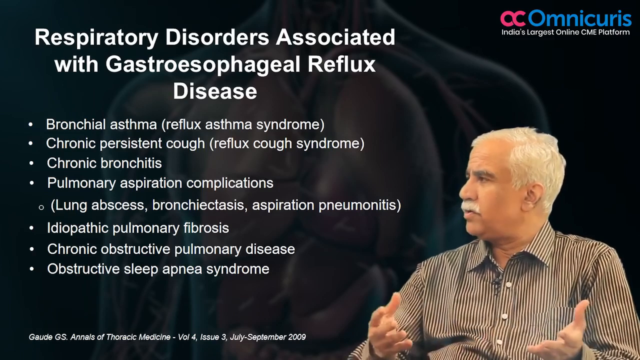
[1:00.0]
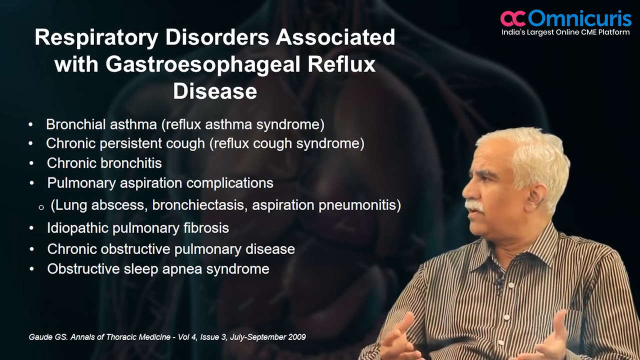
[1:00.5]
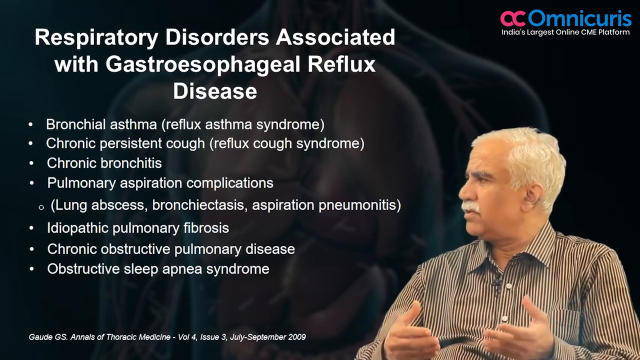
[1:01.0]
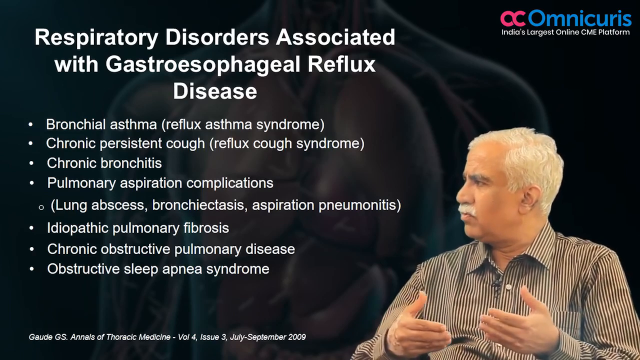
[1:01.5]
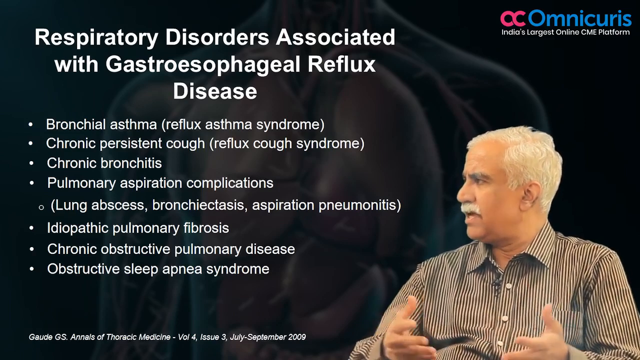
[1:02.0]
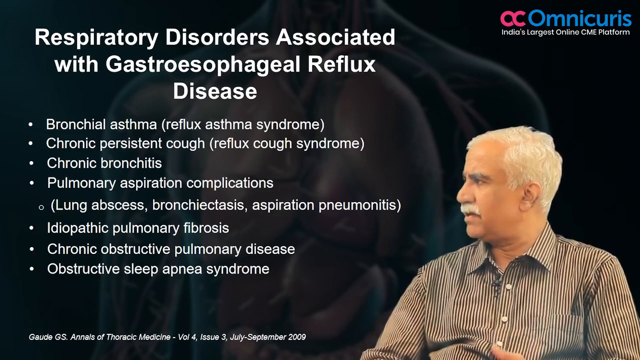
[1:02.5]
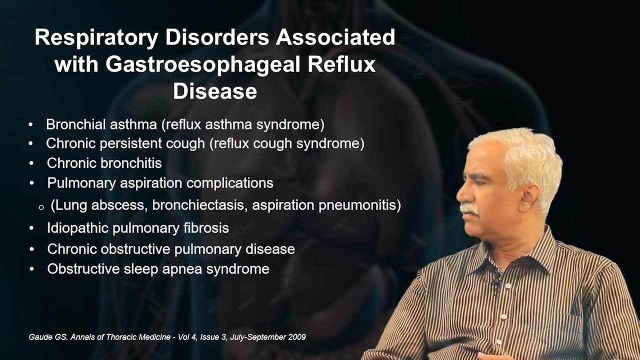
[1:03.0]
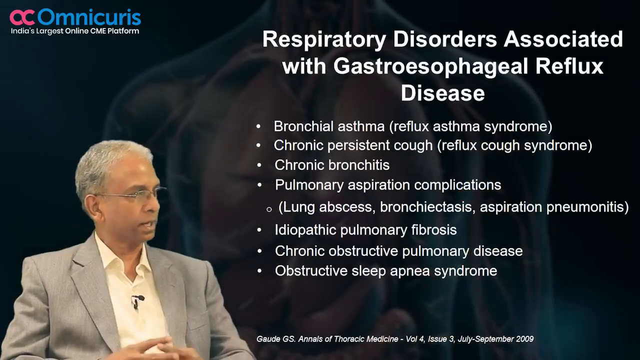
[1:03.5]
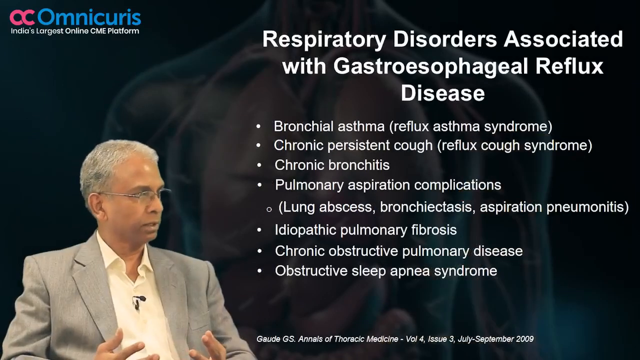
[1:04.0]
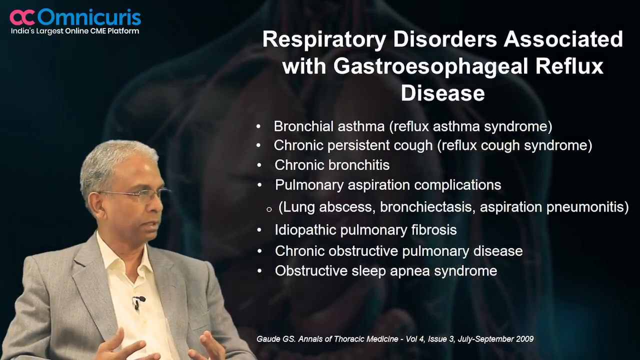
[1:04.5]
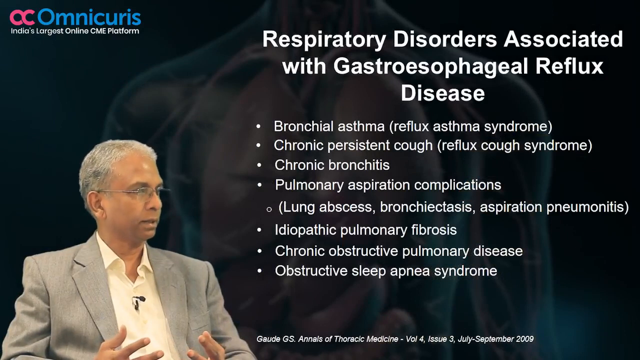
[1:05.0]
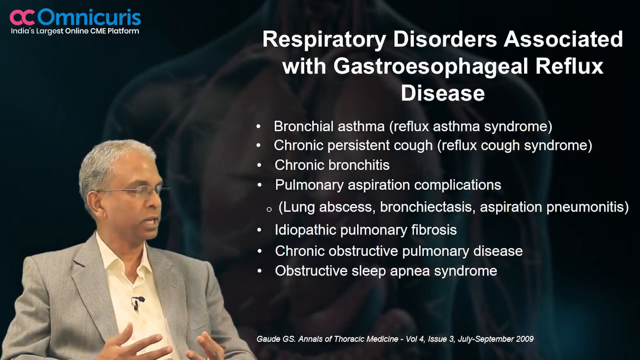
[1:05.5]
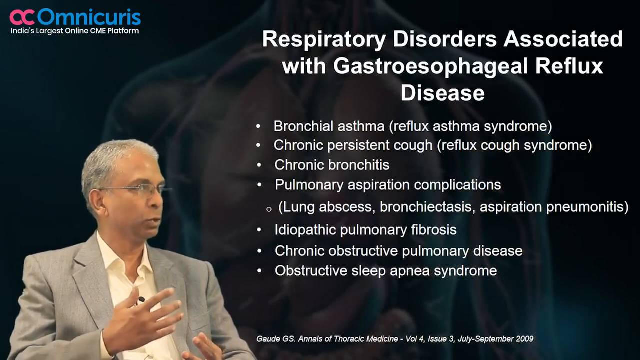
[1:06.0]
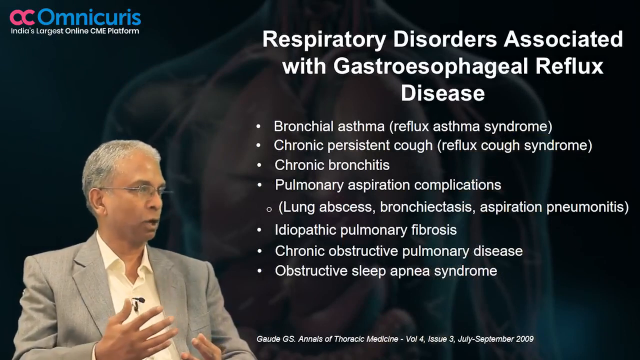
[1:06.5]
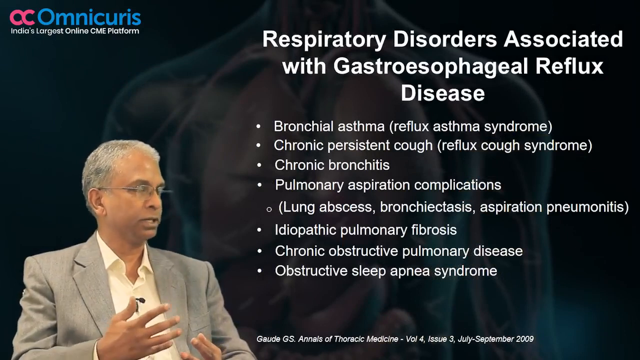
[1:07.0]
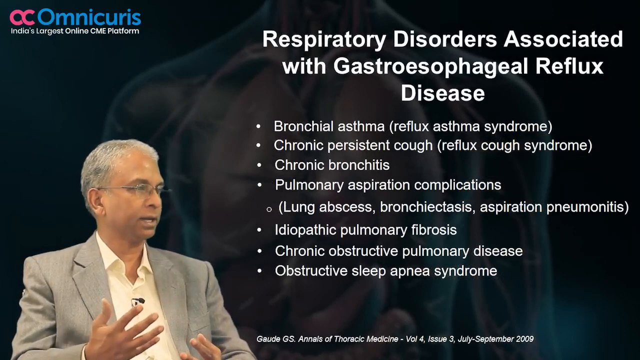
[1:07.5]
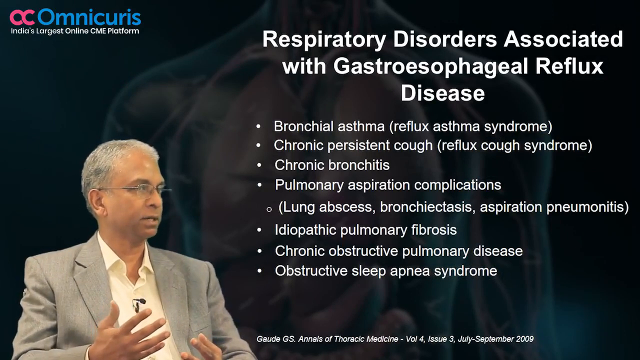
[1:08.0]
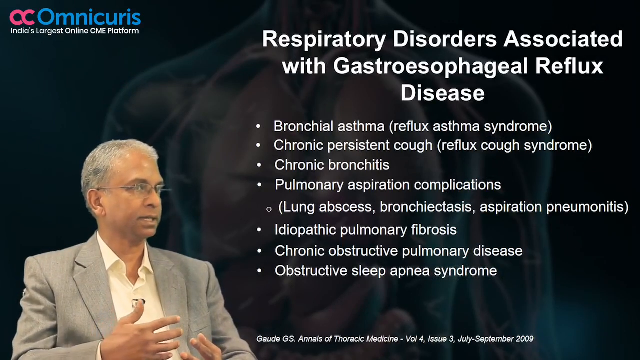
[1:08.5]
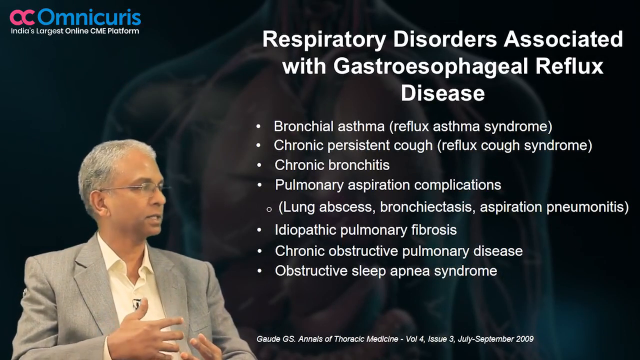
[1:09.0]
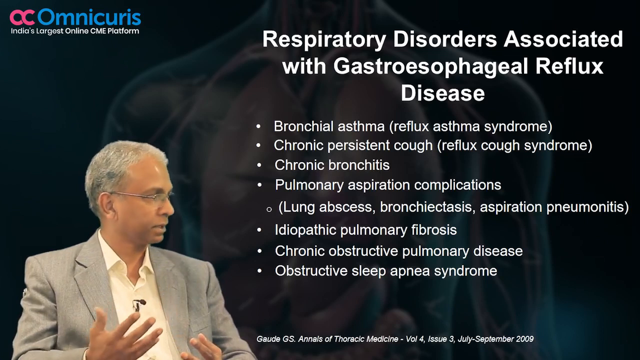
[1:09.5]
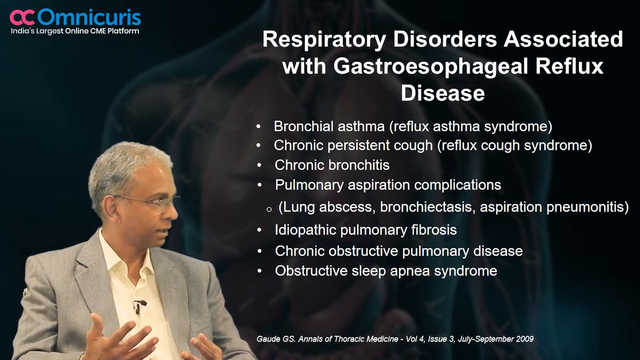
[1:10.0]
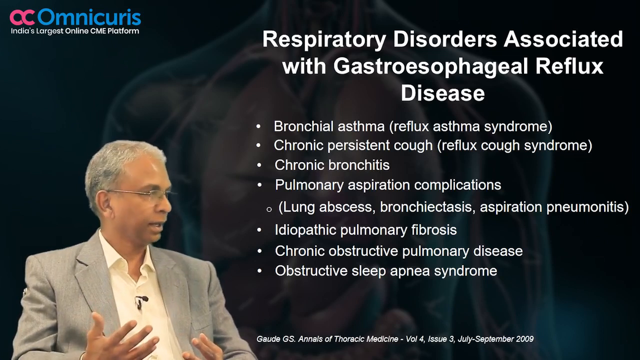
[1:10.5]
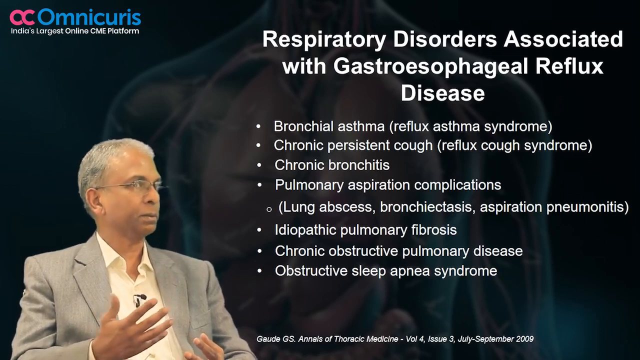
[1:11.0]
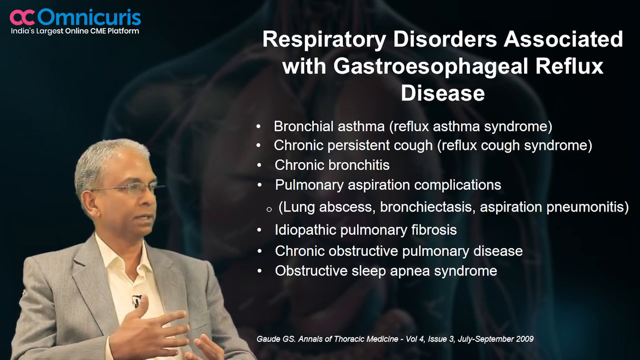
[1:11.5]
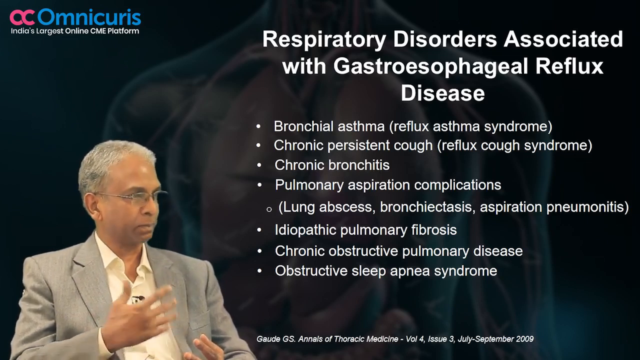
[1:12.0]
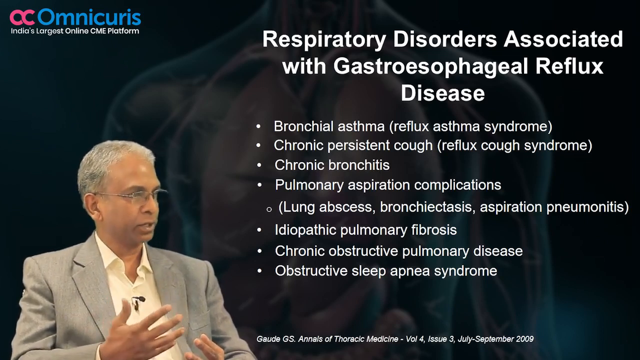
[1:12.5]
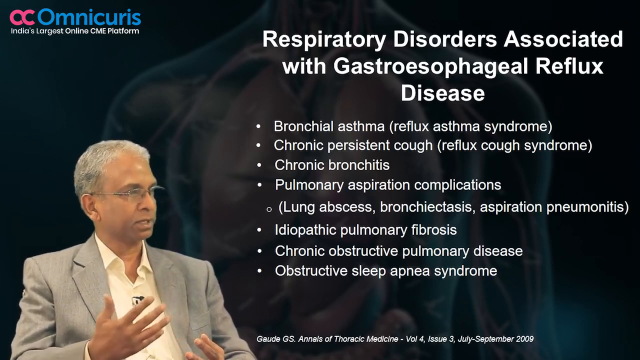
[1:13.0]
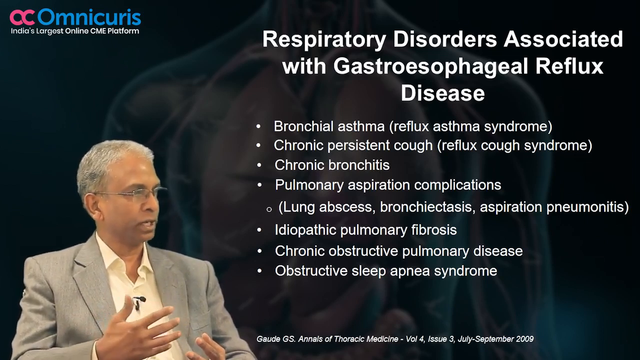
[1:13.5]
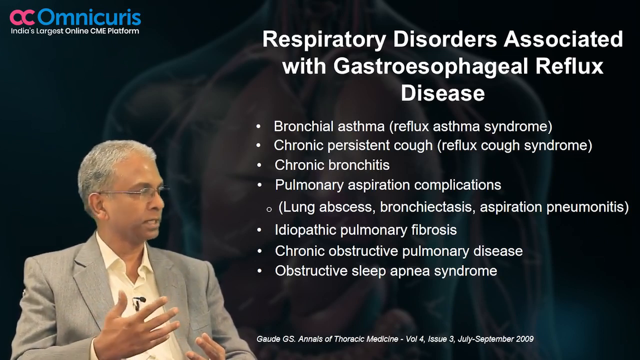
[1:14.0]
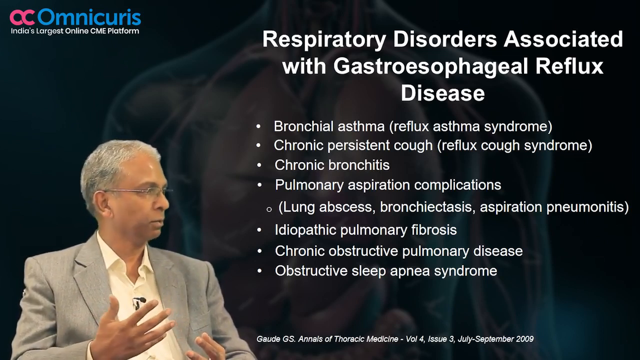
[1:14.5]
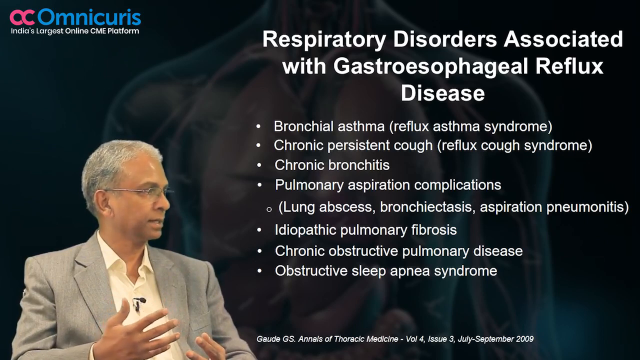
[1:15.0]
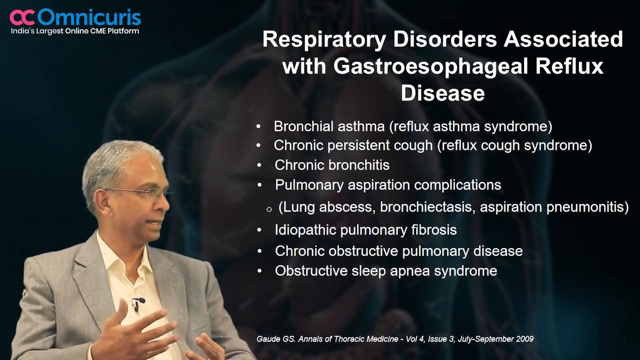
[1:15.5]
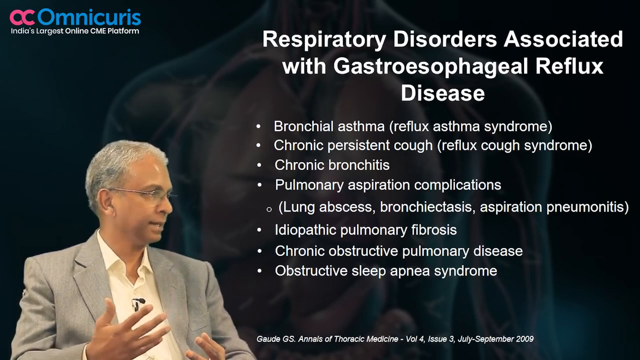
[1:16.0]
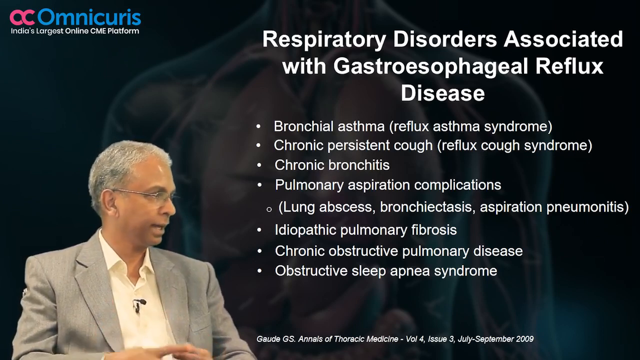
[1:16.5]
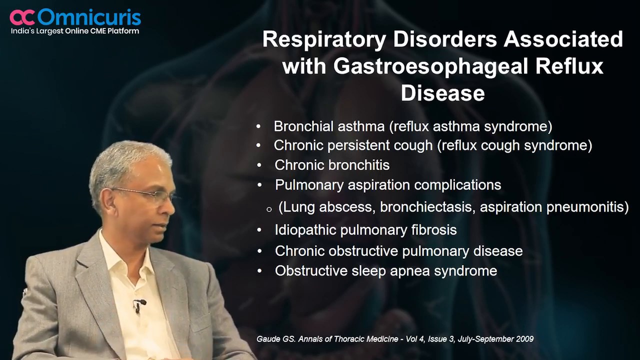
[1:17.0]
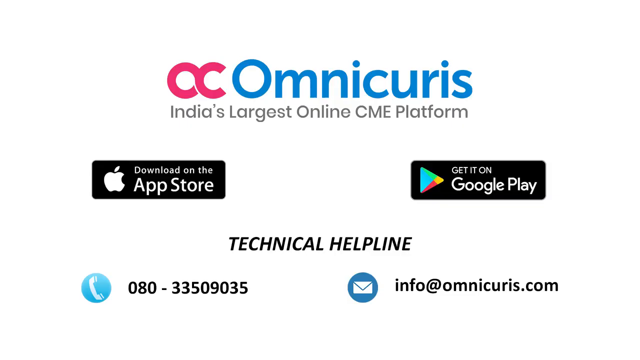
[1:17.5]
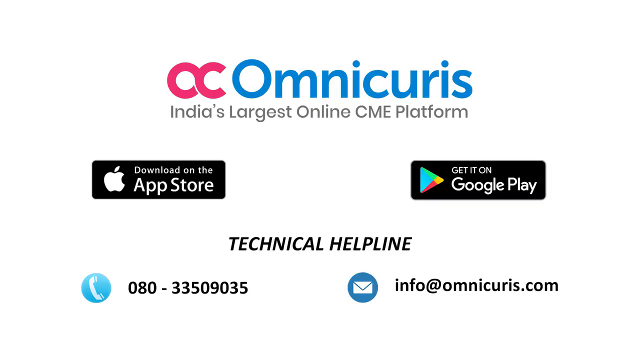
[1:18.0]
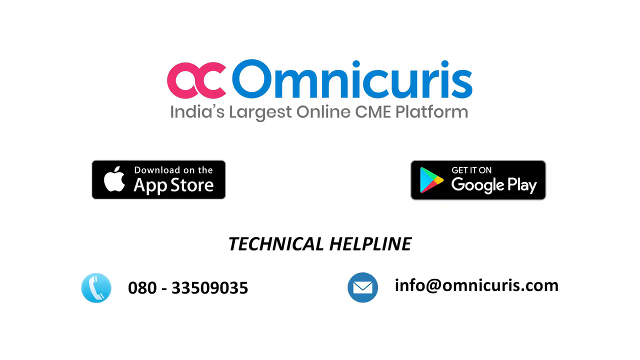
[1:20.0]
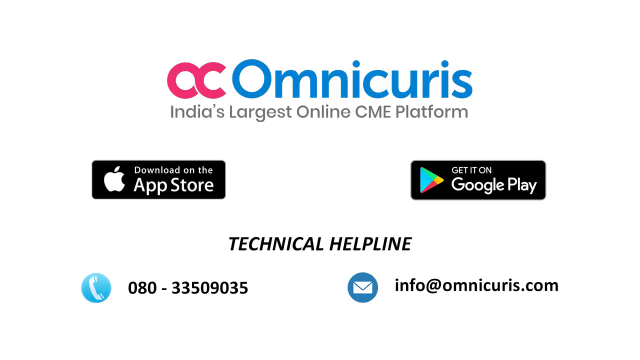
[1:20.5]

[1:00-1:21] Dr. Naresh Bhart is shown on the right-hand side of the screen, with "OC Omnicurus, India's largest online CME platform" in the upper right, while the left side still shows the list of respiratory disorders associated with gastroesophageal reflux disease: "bronchial asthma, reflux asthma syndrome, chronic persistent cough, reflux cough syndrome, chronic bronchitis, pulmonary aspiration complications, lung abscess, bronchiostasis, aspiration pneumatitis, idiopathic pulmonary fibrosis, chronic obstructive pulmonary disease, obstructive sleep apnea syndrome". He continues to speak. Then a doctor on the left-hand side of the screen speaks, with "Omnicurious, India's largest online CME platform" in the upper left, and the same text moved over to the right-hand side. At the end, the screen reads "OC Omnicurious, India's largest online CME platform", "Download on the App Store", "Get it on Google Play", a technical helpline "080-335-09035", and the email "info@omnicurious.com".